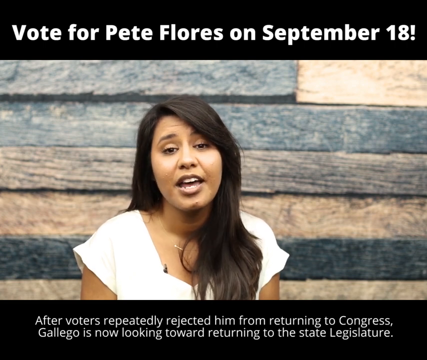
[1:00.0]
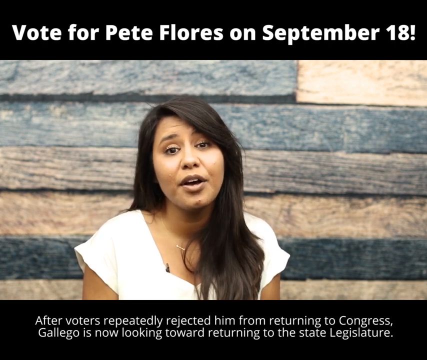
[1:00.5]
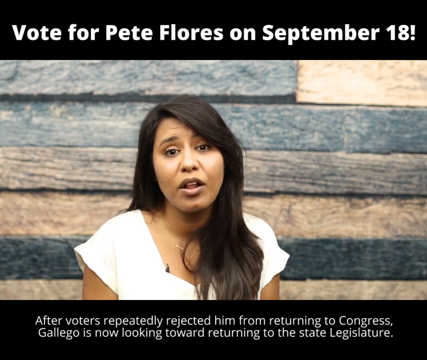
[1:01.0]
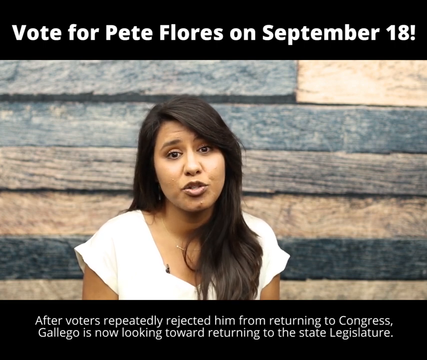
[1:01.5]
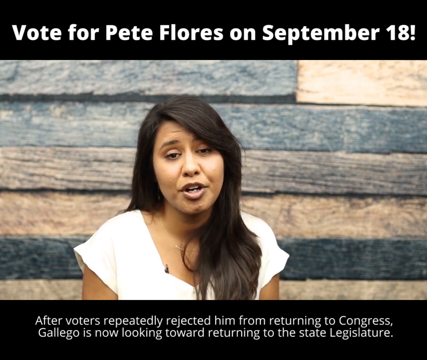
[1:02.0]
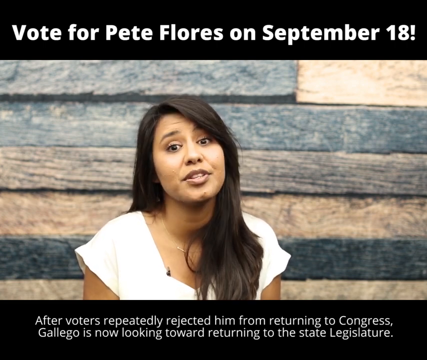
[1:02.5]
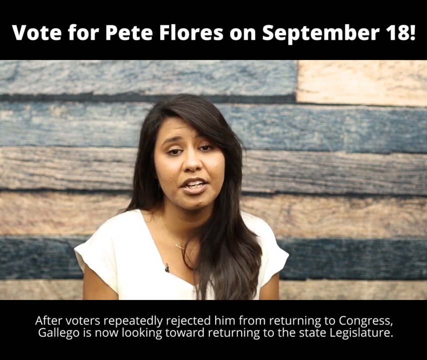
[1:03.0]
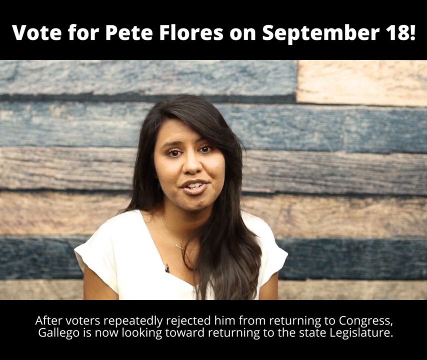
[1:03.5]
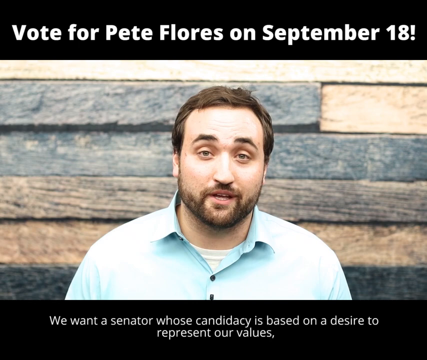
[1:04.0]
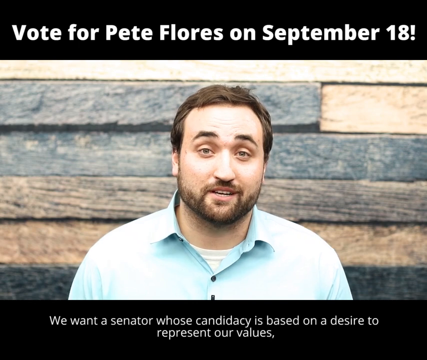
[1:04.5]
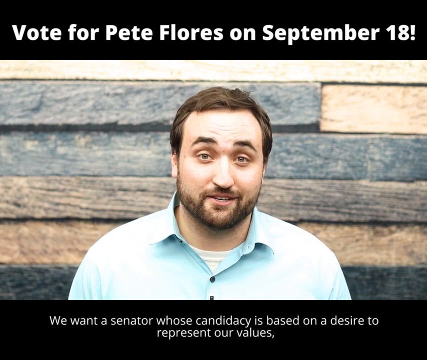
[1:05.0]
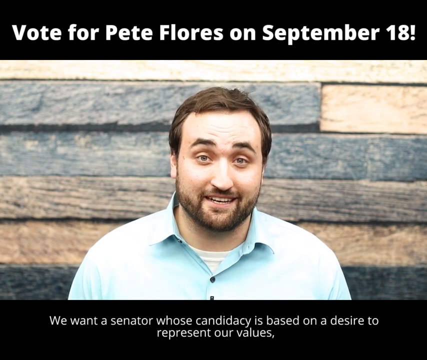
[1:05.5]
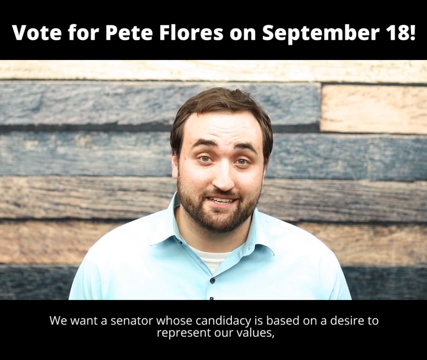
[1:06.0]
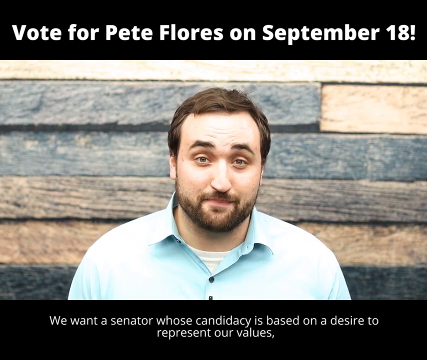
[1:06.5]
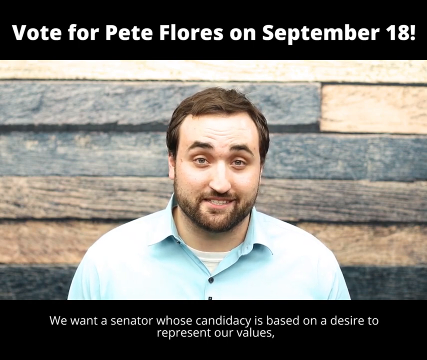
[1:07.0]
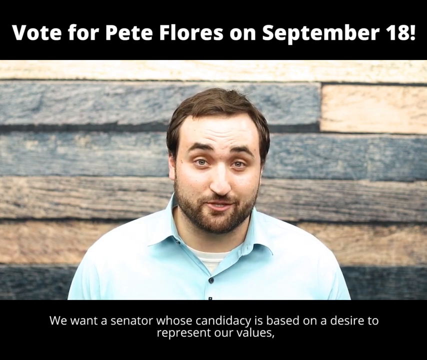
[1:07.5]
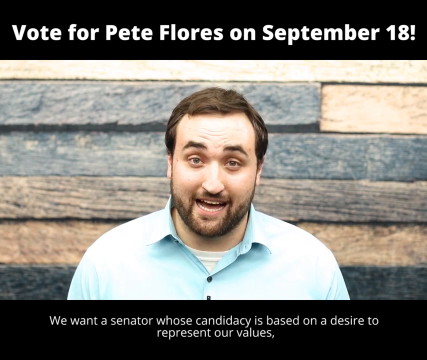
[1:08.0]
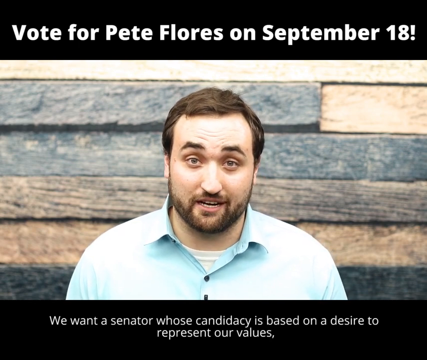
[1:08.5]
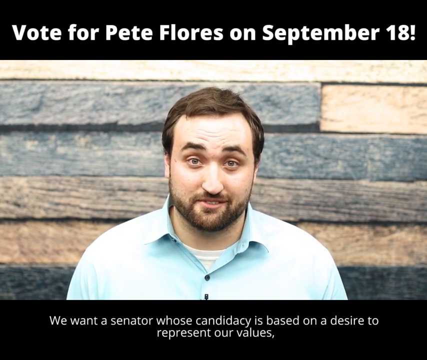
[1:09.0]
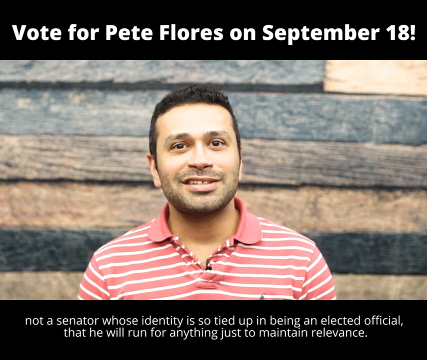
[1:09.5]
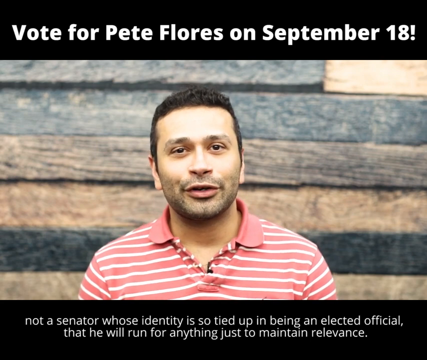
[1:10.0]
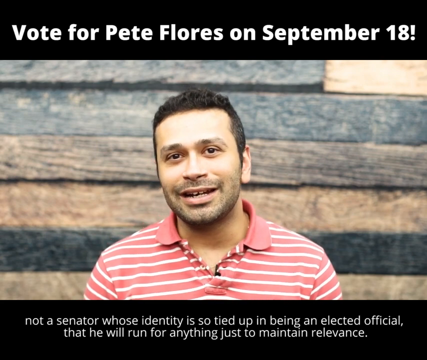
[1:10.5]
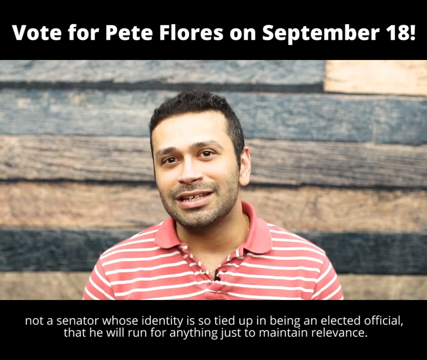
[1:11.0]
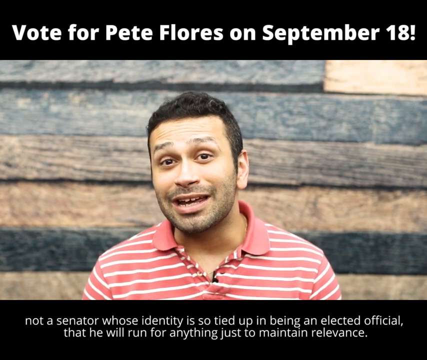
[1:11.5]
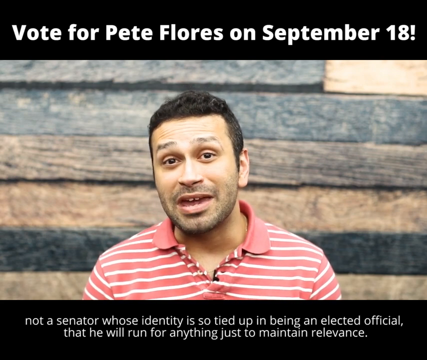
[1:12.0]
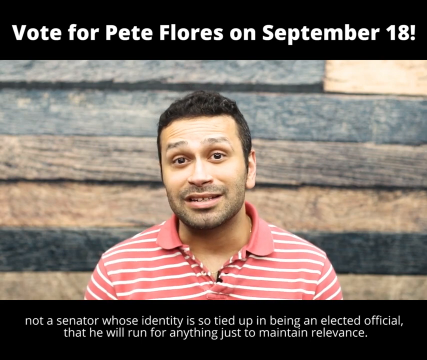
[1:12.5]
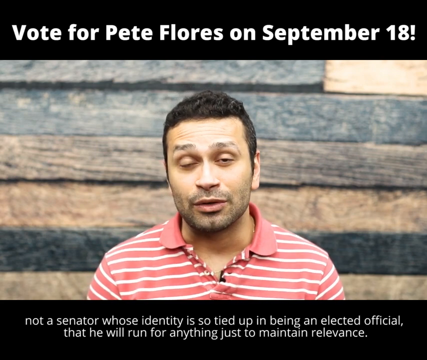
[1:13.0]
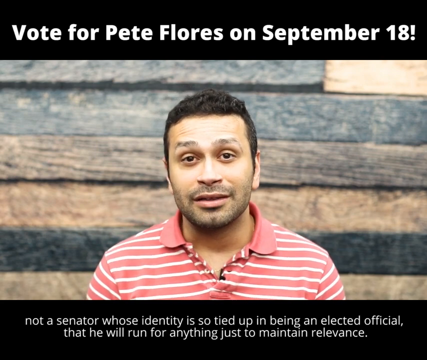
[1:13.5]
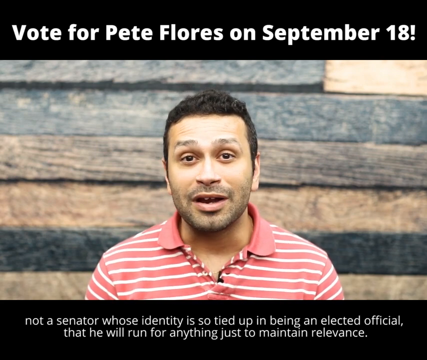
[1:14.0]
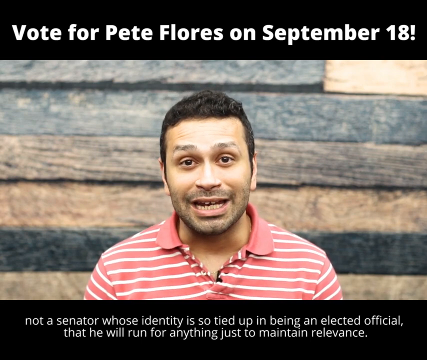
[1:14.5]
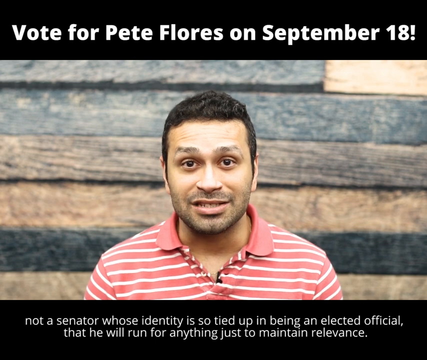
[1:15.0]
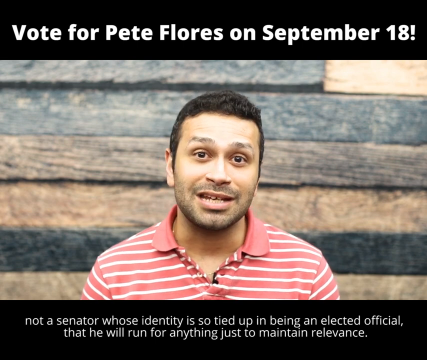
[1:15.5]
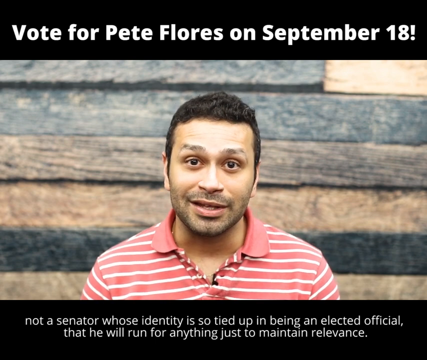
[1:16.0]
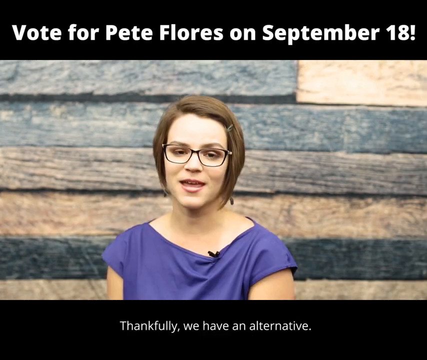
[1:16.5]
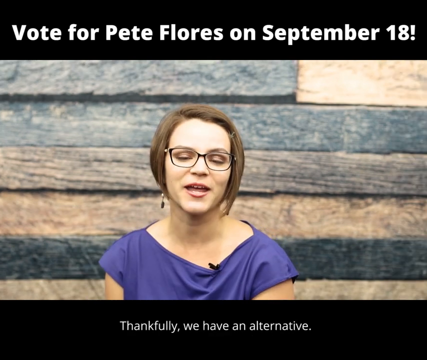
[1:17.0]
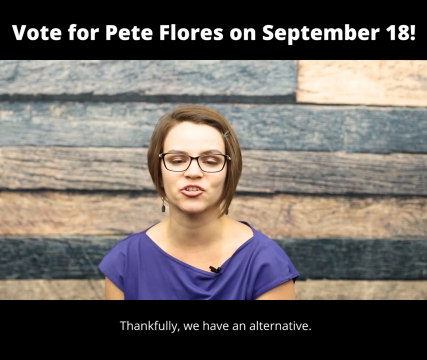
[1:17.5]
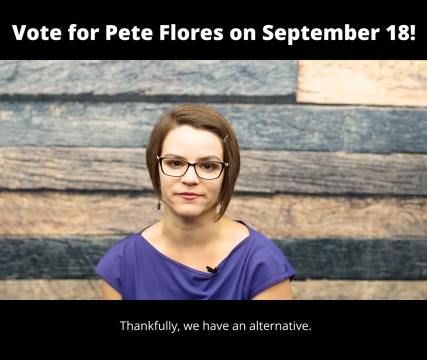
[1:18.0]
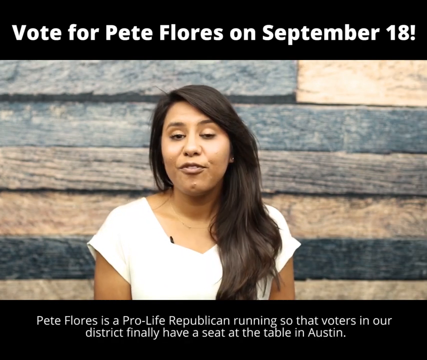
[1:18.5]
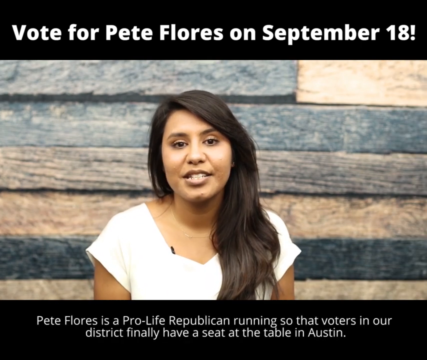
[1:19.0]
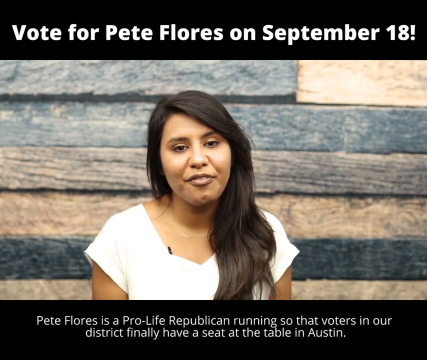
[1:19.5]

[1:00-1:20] A young woman with long black hair, wearing a short-sleeved white t-shirt and a silver chain around her neck, talks directly to the camera. A banner above her head says "vote for Pete Flores on September the 18th", and words underneath her say "after voters repeatedly rejected him from returning to Congress, Gallego is now looking forward to returning to the state legislature." Next is a young man with short black hair, a beard and a moustache, wearing a collared blue shirt and talking directly to the camera; the words underneath him change to "we want a senator whose candidacy is based on a desire to represent our values." The view changes to a different man, a browner-skinned man with short black hair in a red top with white stripes, standing in front of wooden boards running horizontally across the wall. Then a young woman with short brown hair in a blue t-shirt appears, and the words underneath her say "thankfully we have an alternative and Pete Flores is a pro-life Republican running so that voters in our district finally have a seat at the table in Austin."